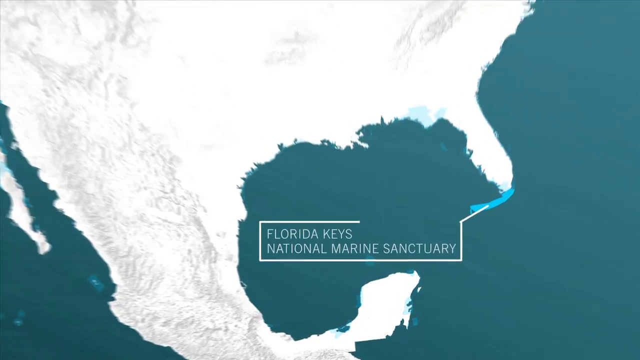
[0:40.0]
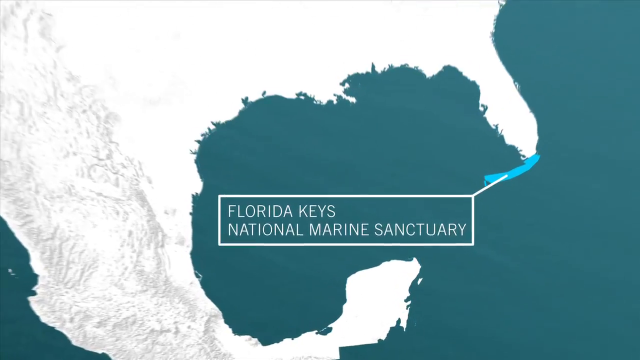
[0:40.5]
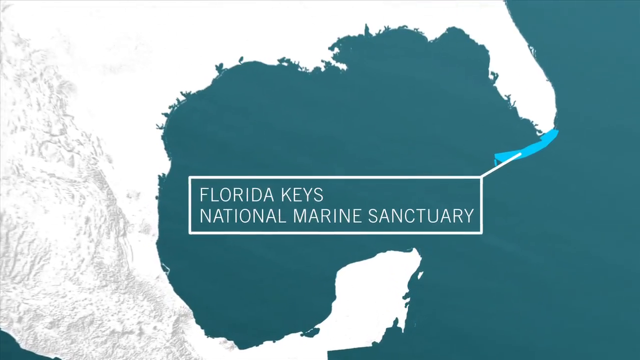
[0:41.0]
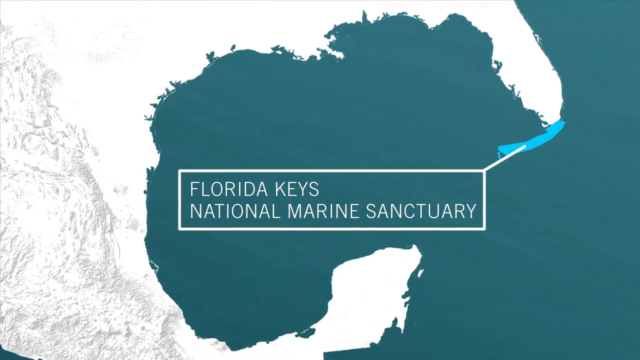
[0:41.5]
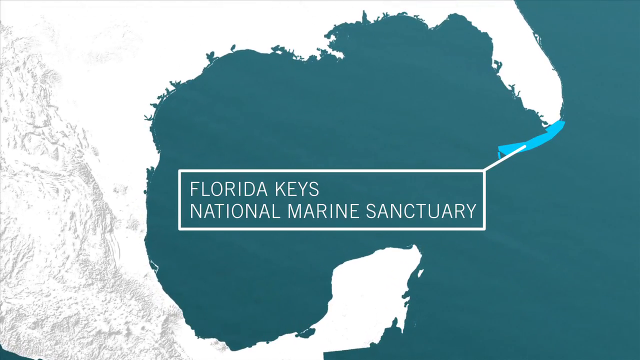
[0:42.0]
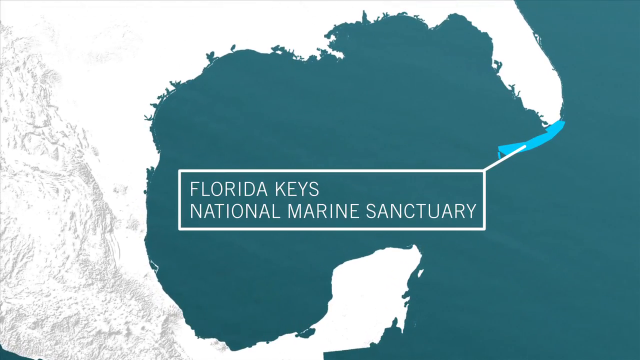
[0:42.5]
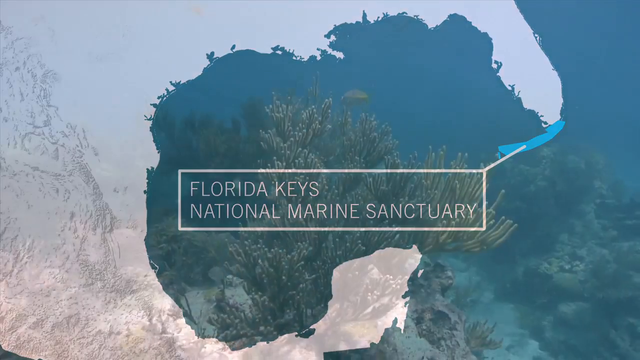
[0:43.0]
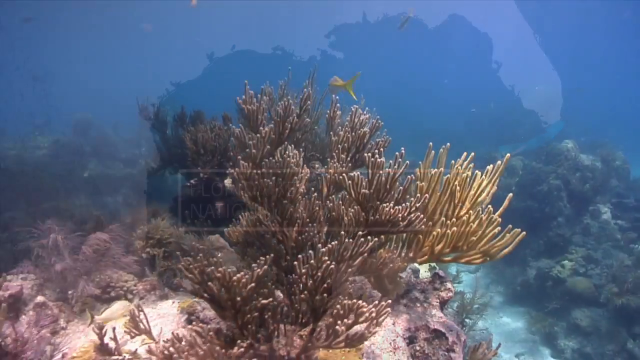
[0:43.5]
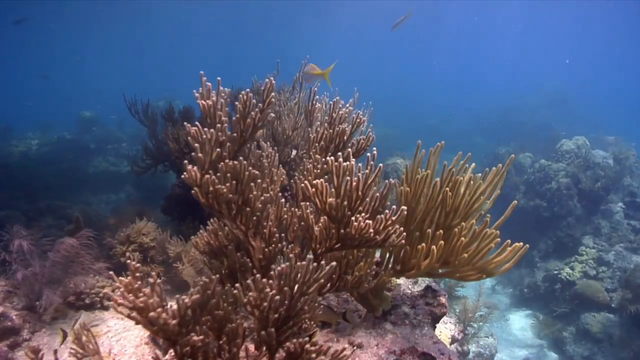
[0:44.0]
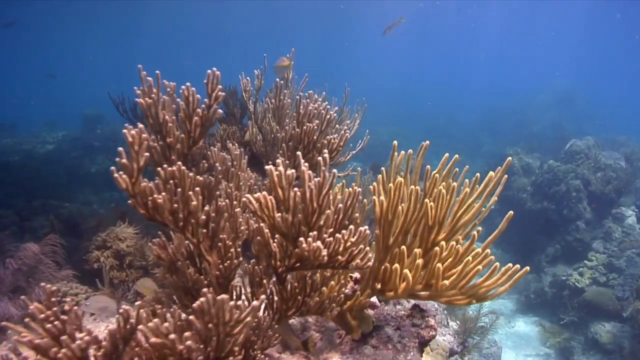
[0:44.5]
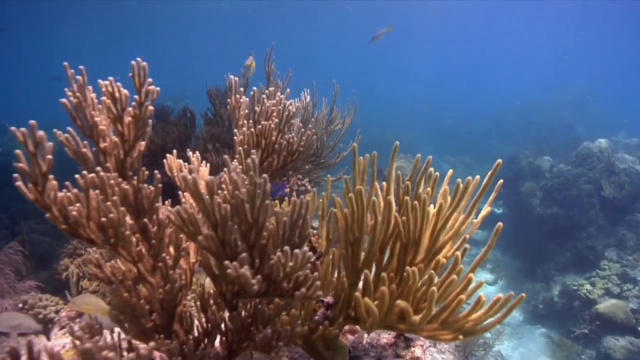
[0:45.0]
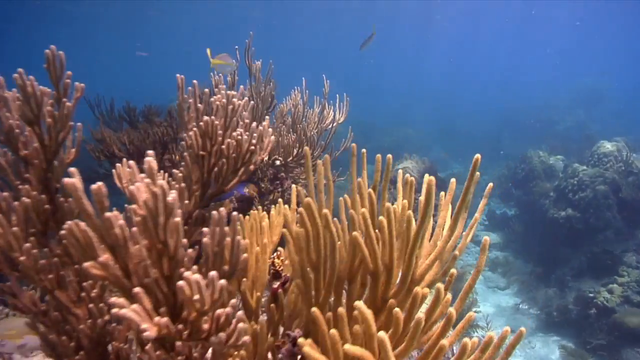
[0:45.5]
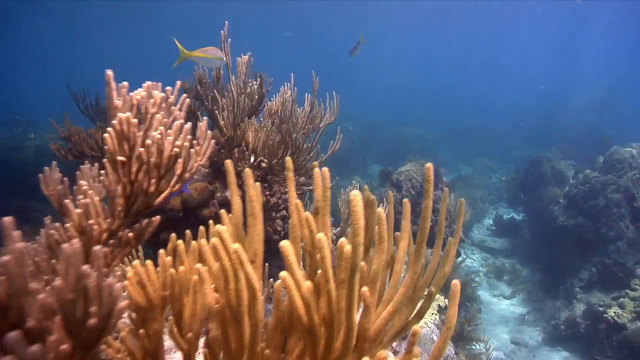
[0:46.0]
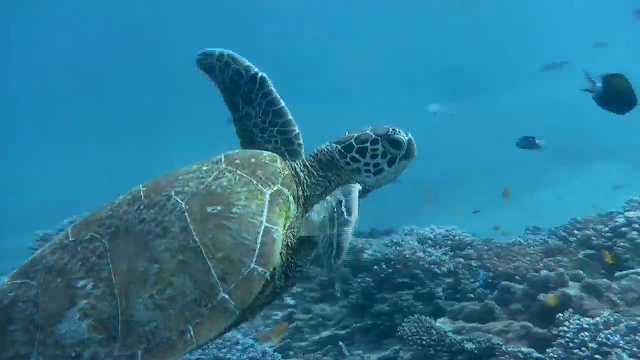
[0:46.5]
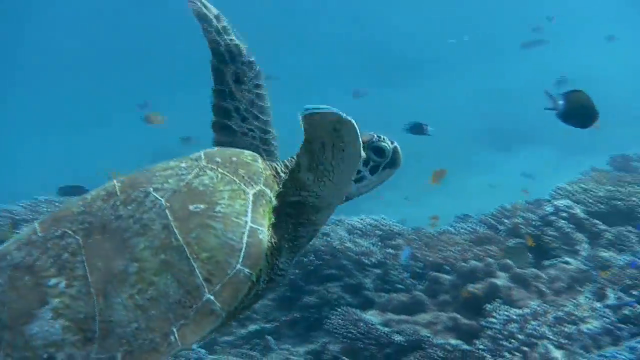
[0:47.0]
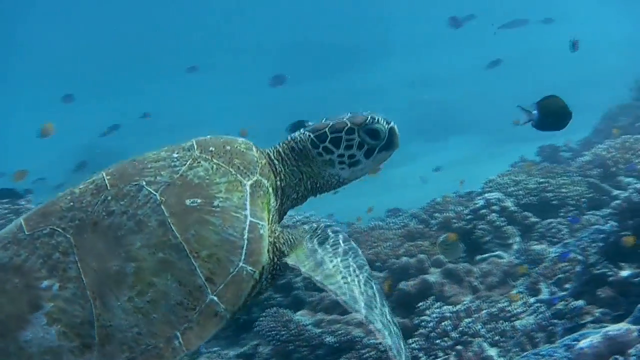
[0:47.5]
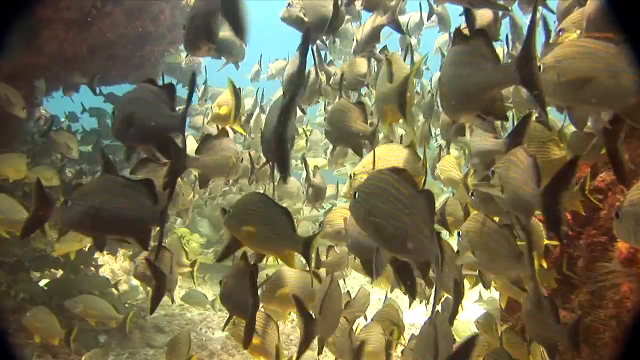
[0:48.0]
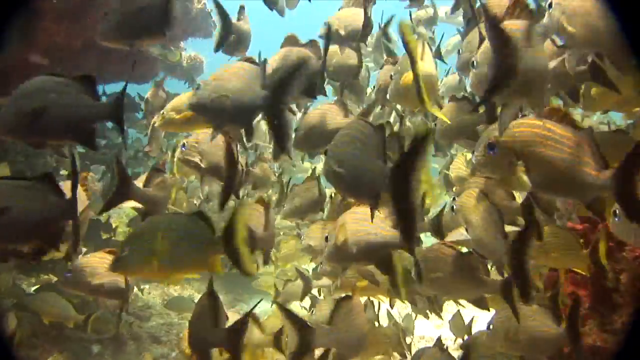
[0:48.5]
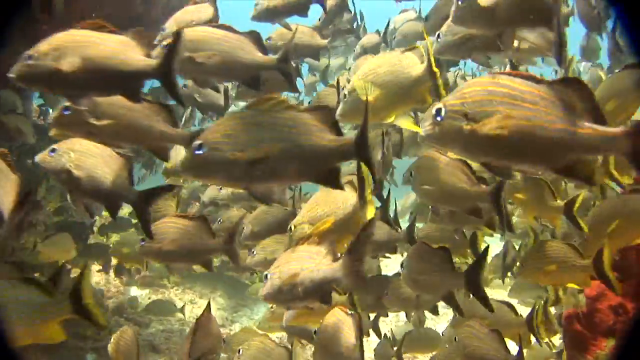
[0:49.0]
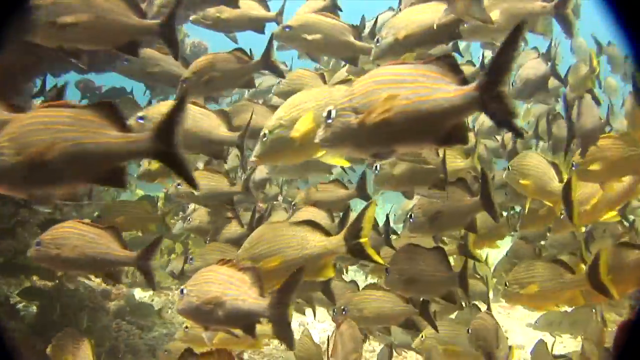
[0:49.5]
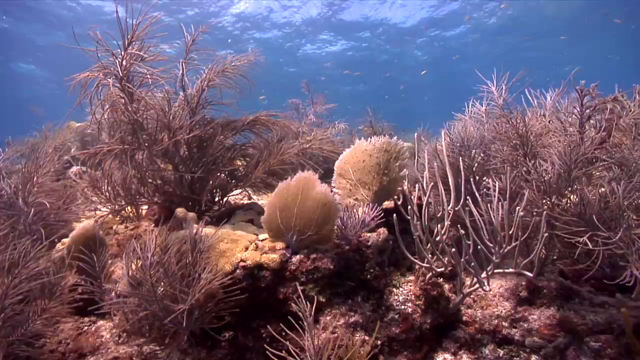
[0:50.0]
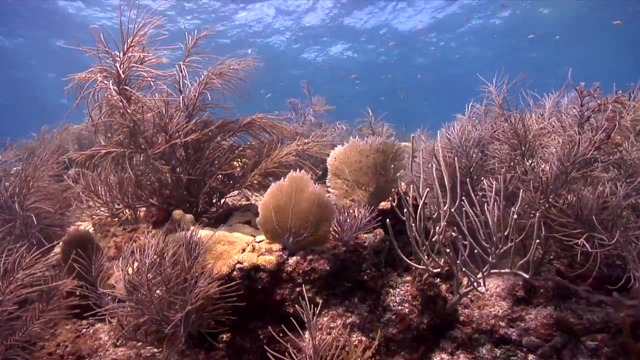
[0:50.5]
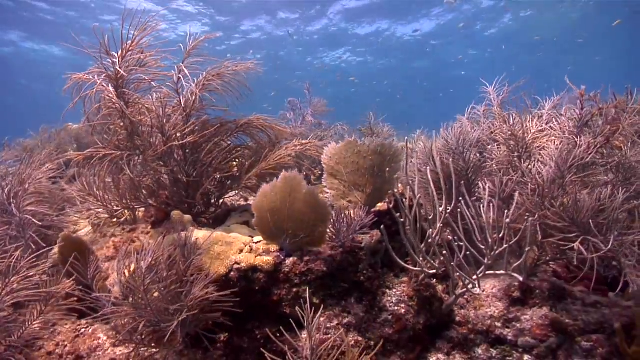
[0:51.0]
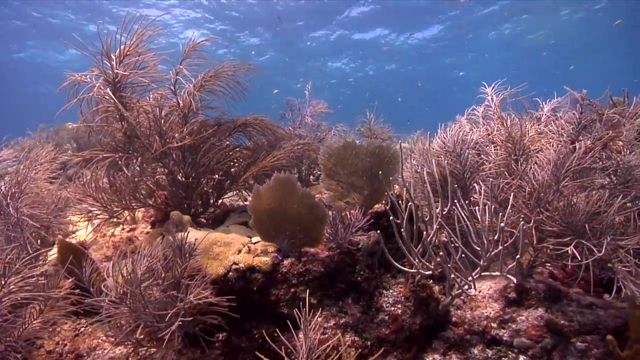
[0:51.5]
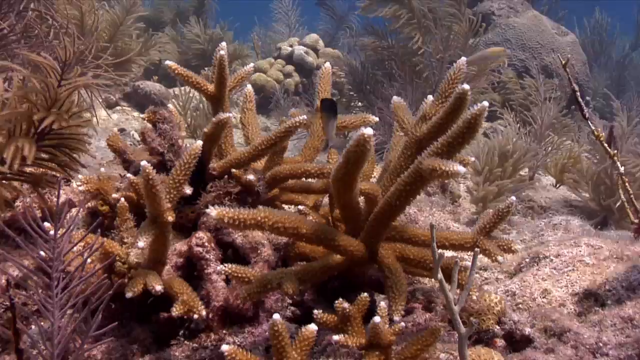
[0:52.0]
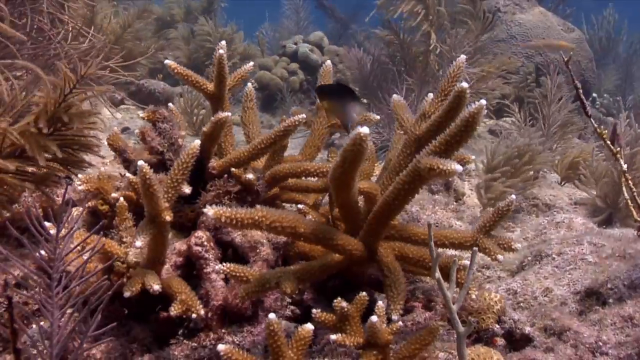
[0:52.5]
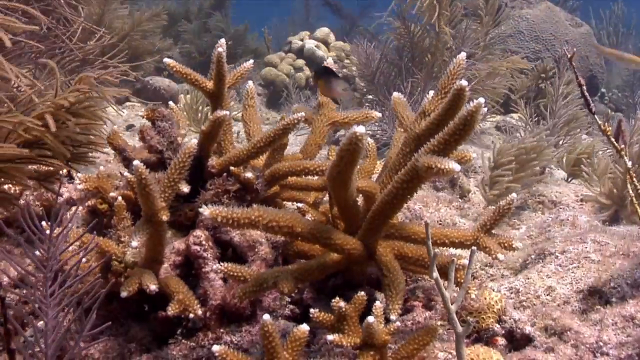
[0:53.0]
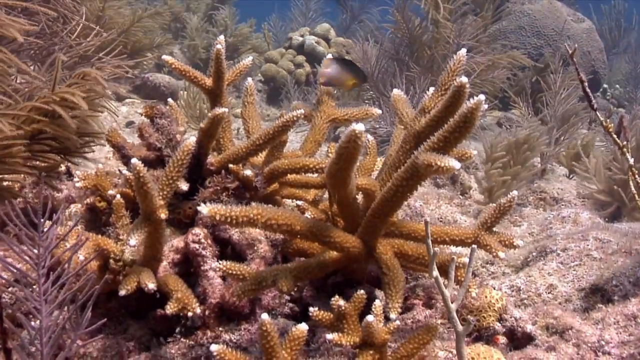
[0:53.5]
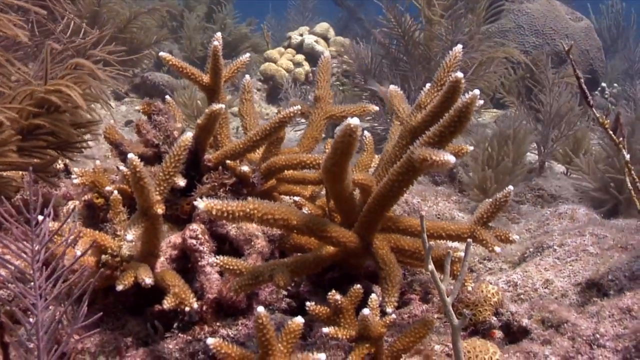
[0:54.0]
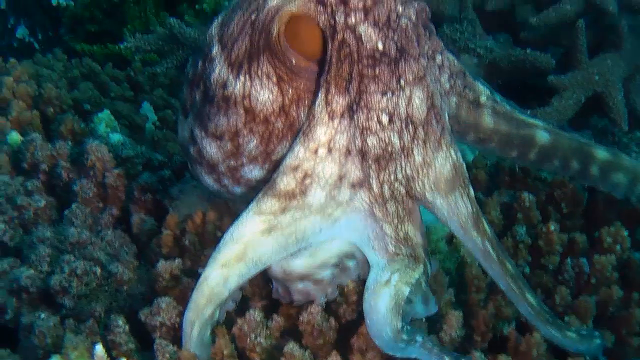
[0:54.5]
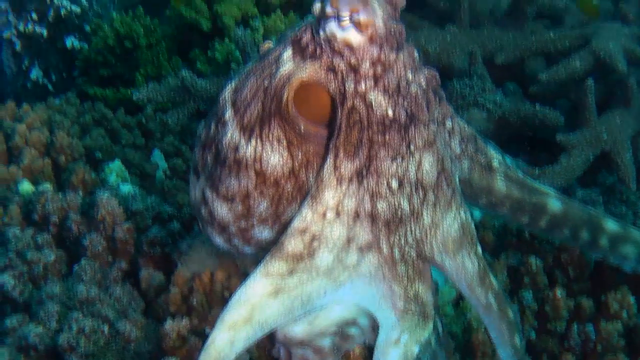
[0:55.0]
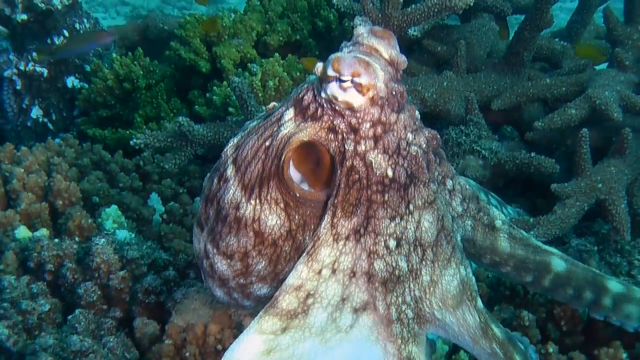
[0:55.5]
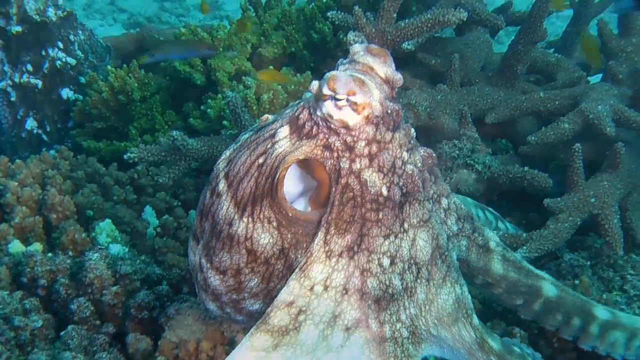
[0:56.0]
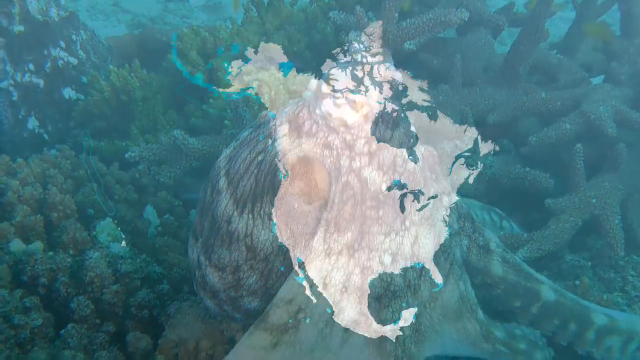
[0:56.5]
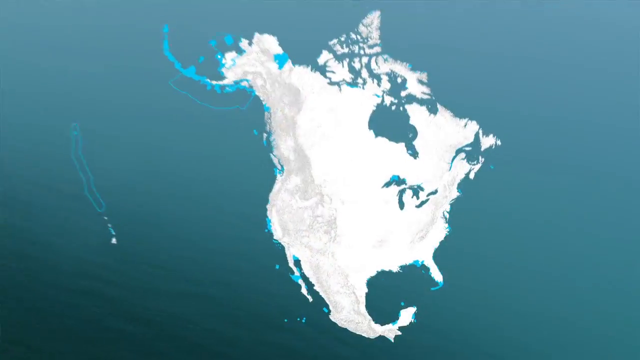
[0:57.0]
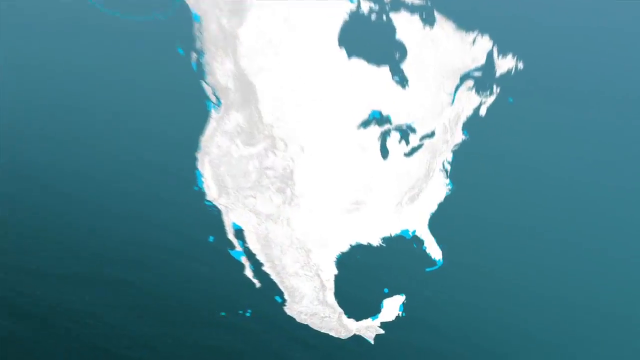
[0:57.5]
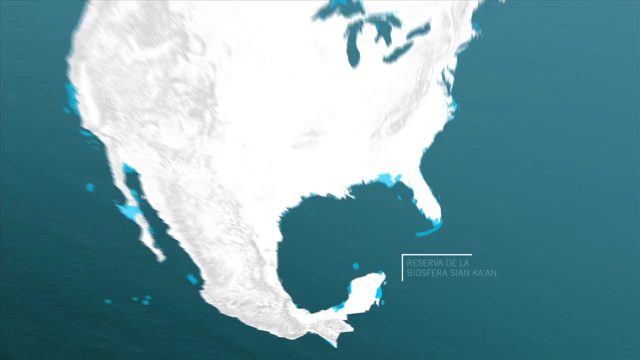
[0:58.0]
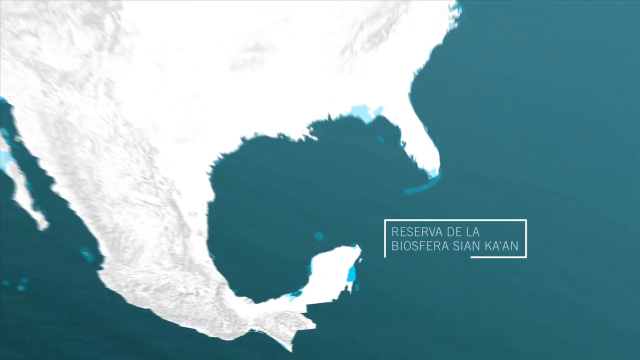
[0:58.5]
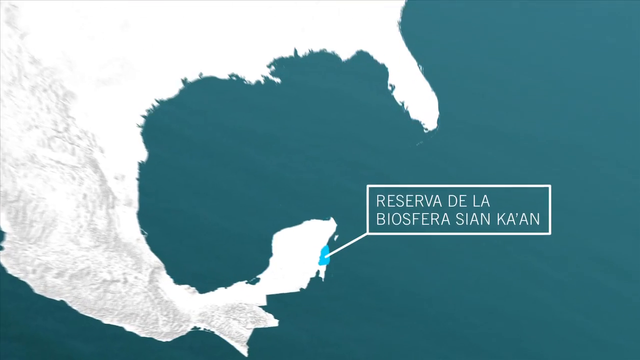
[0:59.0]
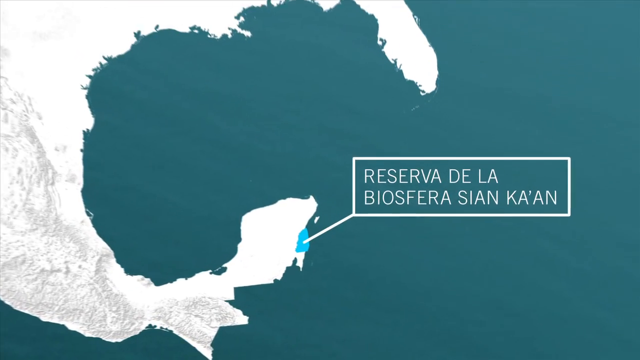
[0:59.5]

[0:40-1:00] The map of the North American continent is zoomed into a place at the bottom of the continent. A caption comes up reading "Florida Keys National Marine Sanctuary," pointing to a little blue area. Footage of a reef follows, with coral, a turtle swimming around, and fish. The view moves through a school of fish with a lot of yellow fish. More varieties of coral appear, some prickly and some spiky looking, and then an octopus. Another marine protected area is then shown, labeled "Reserva de la Biosfera Sian Kaan."